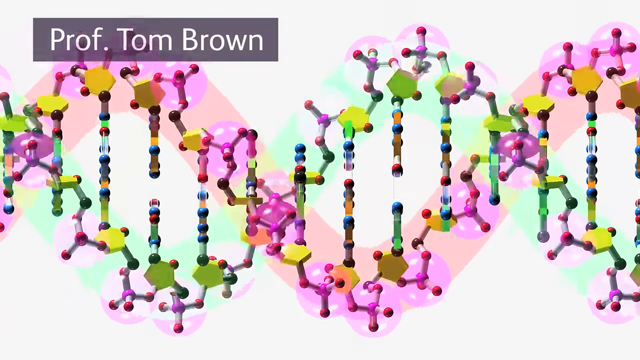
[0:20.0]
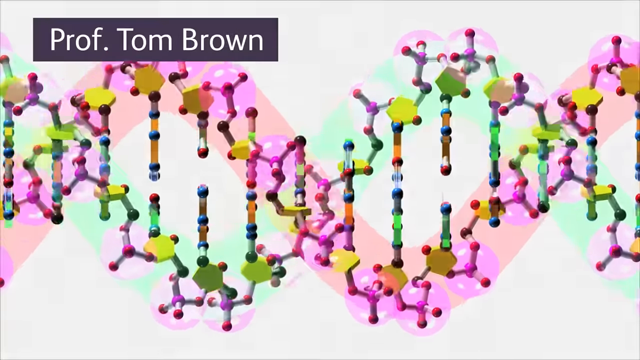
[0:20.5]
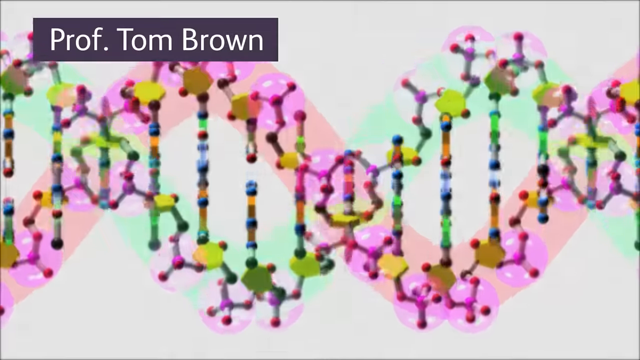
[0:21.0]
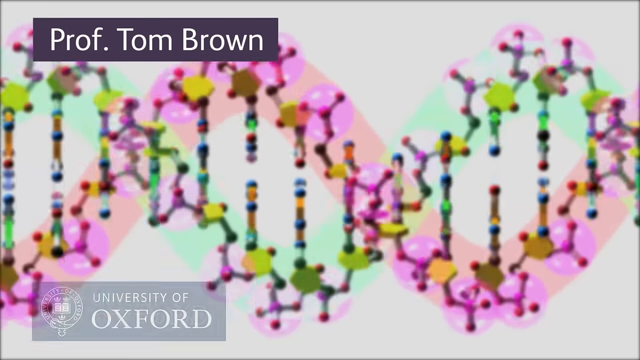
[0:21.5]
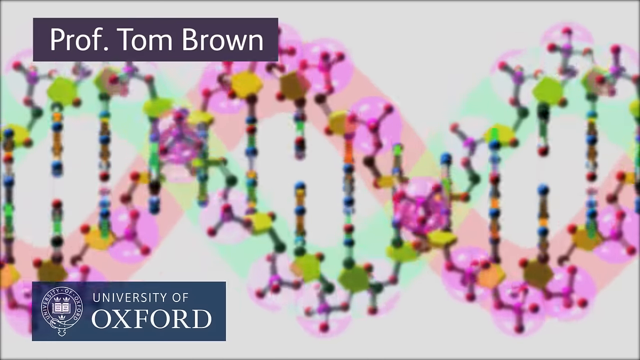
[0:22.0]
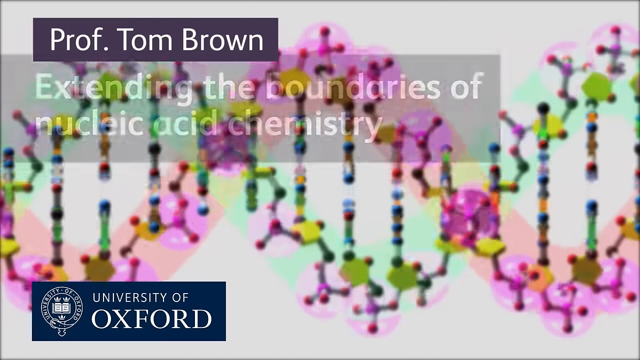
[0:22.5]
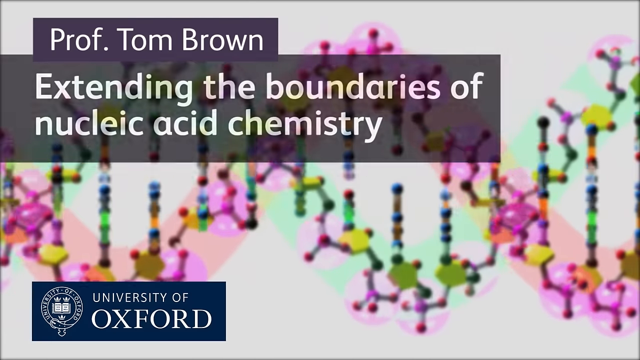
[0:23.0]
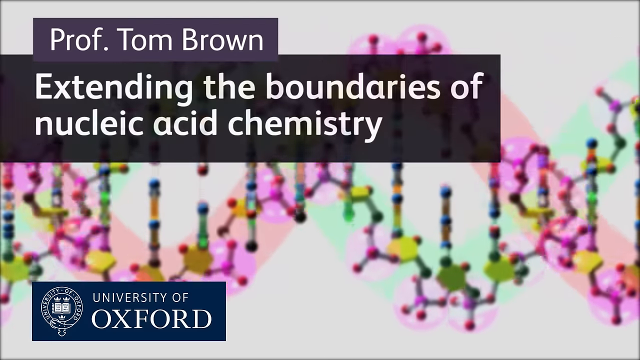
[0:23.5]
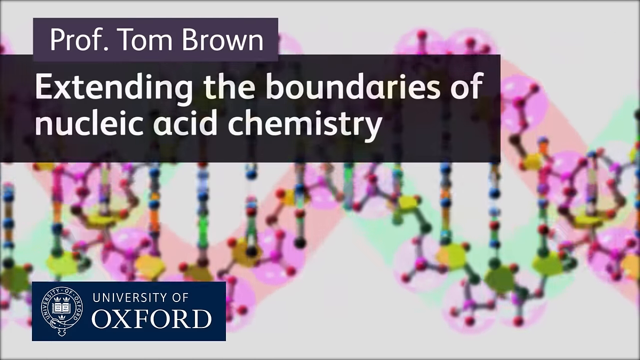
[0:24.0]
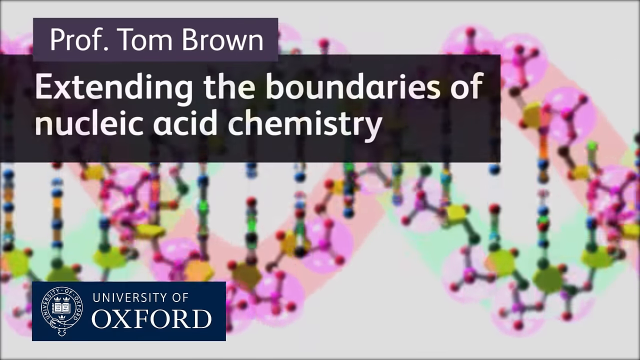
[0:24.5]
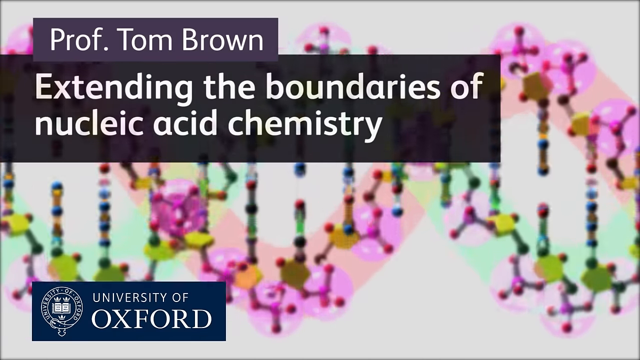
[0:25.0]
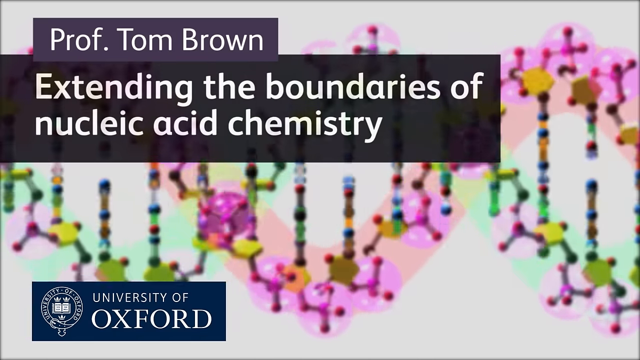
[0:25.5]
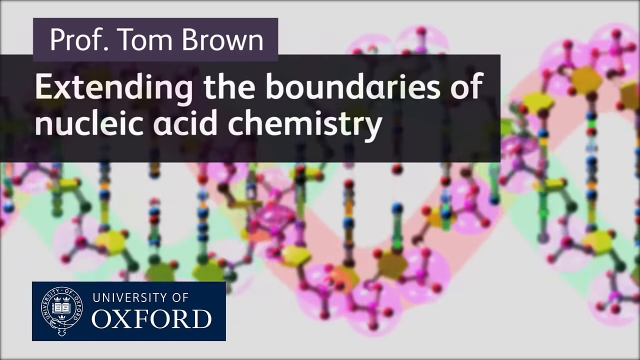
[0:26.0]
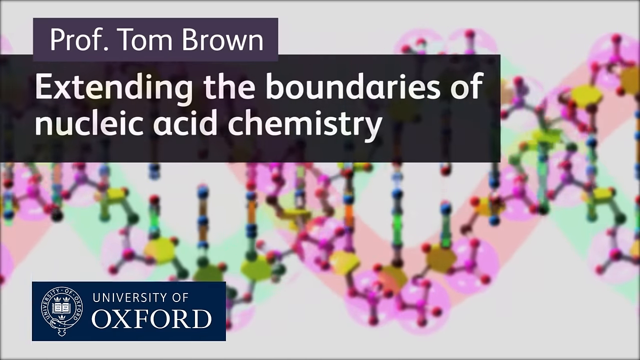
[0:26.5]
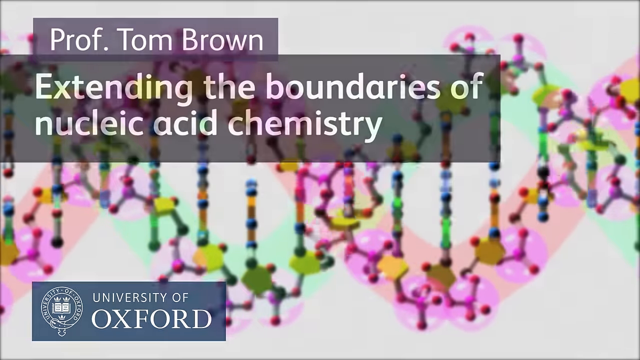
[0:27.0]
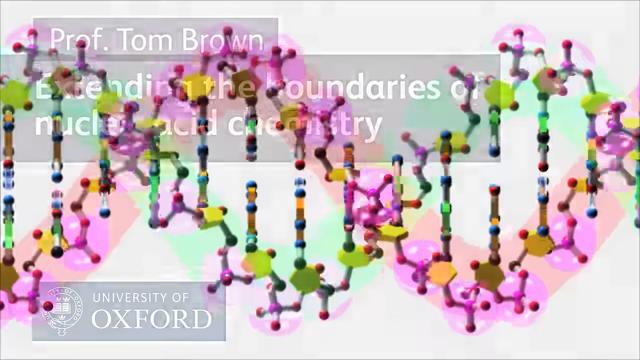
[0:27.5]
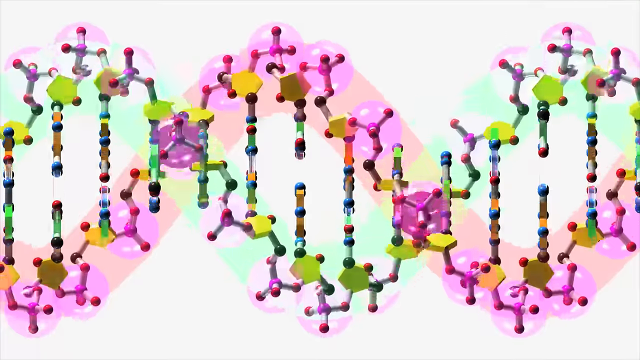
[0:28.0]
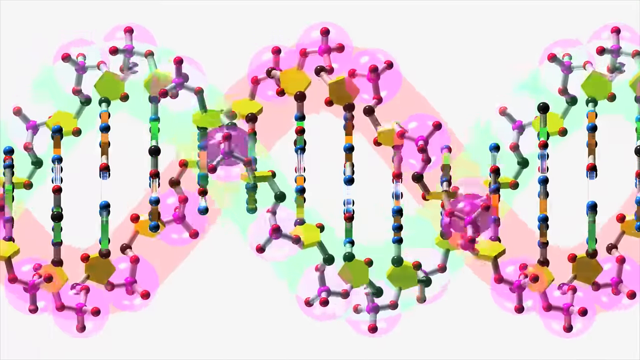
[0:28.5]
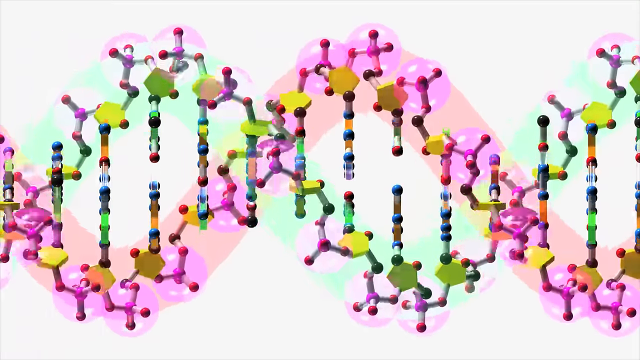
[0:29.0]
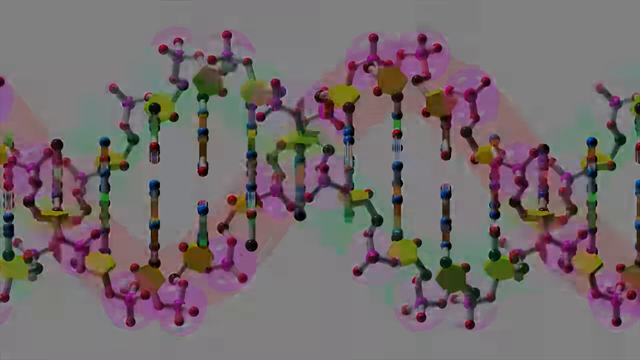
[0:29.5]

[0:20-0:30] A strand of DNA is shown horizontally rather than vertically. At the top left of the screen, a gray banner reads "PROF Tom Brown" in white letters. The DNA spins around. A blue banner appears at the bottom of the screen with the University of Oxford seal at the left and "University of Oxford" in white letters to the right of the seal. Another banner appears at the top, below Tom Brown's name, reading "extending boundaries of nucleic acid chemistry". Everything fades away, and the scene switches to a screen with a black background.